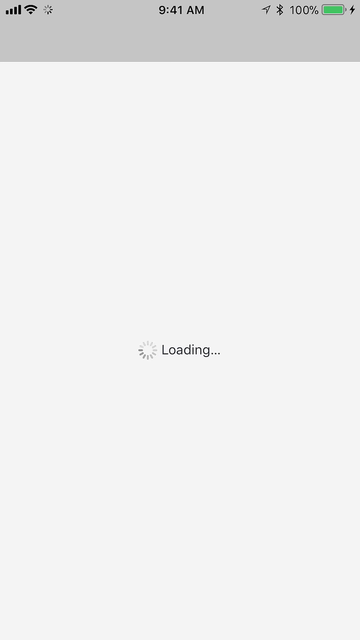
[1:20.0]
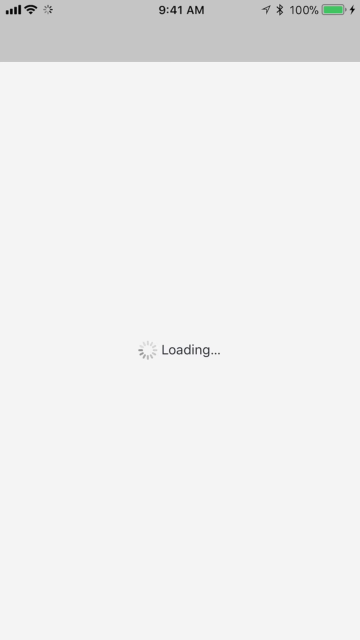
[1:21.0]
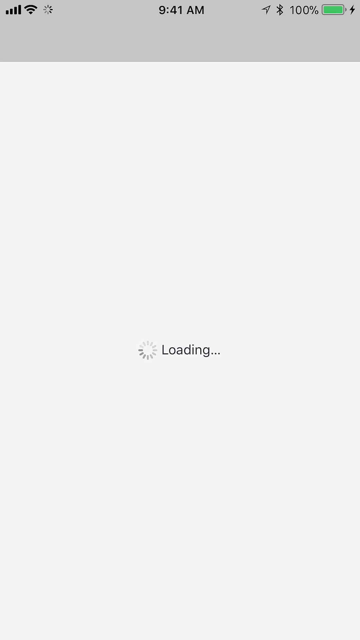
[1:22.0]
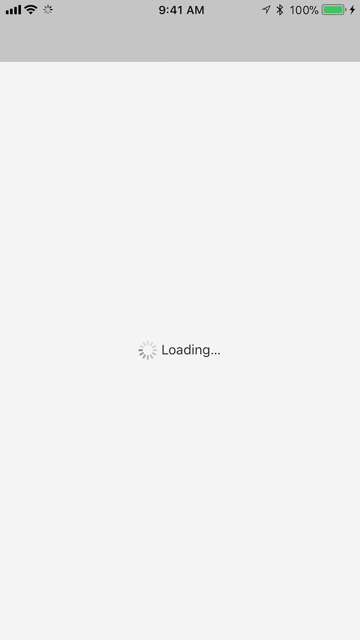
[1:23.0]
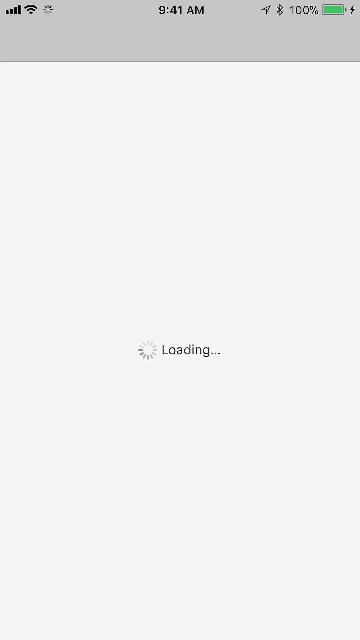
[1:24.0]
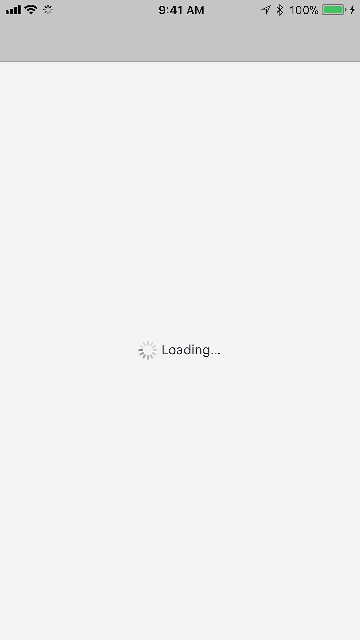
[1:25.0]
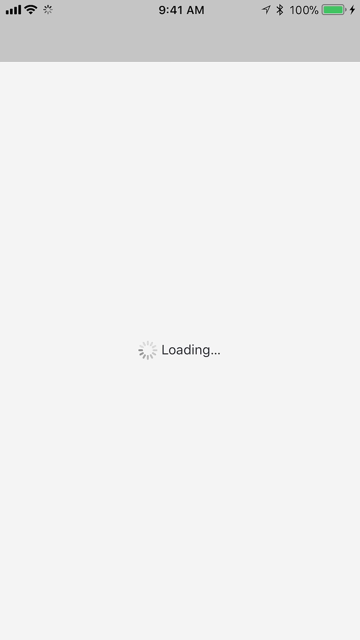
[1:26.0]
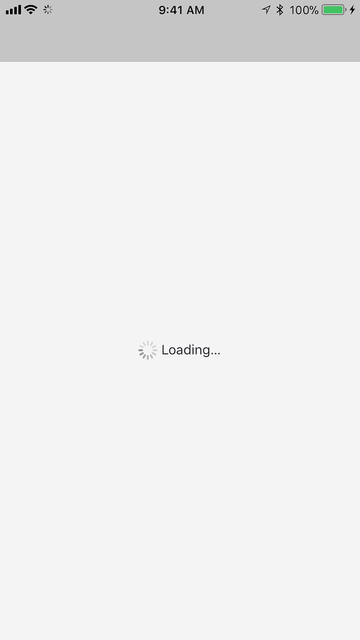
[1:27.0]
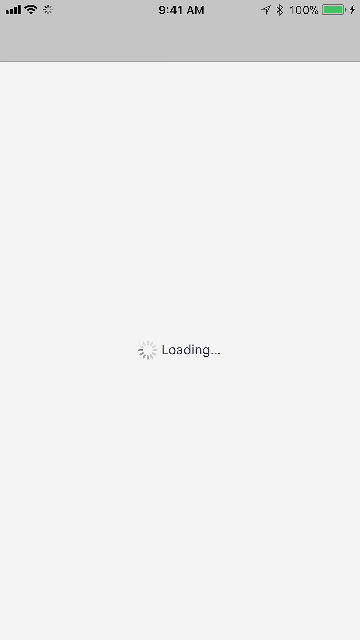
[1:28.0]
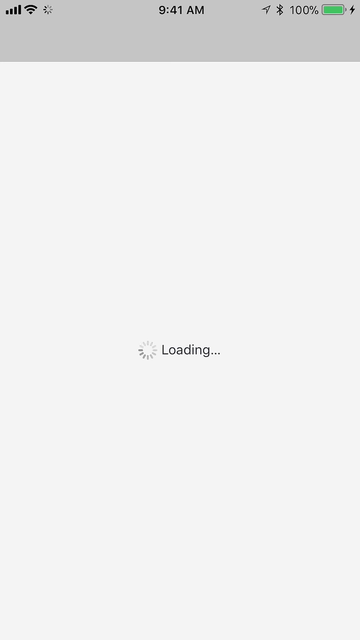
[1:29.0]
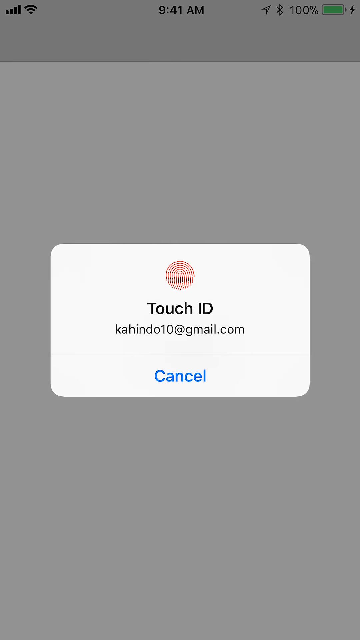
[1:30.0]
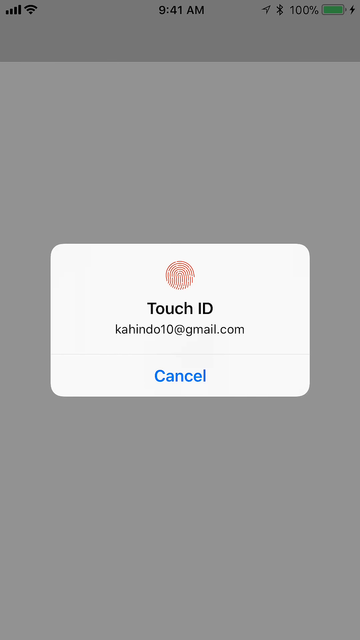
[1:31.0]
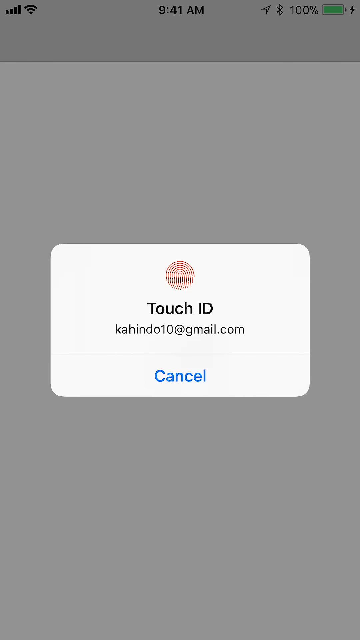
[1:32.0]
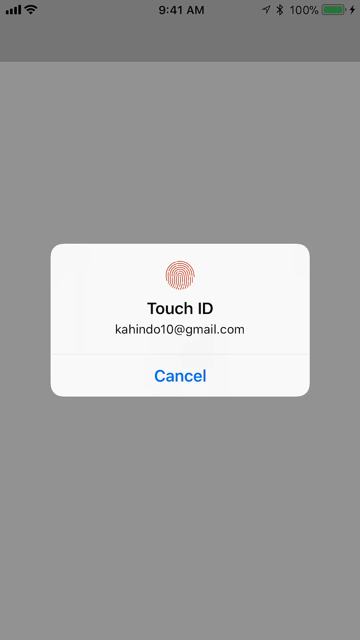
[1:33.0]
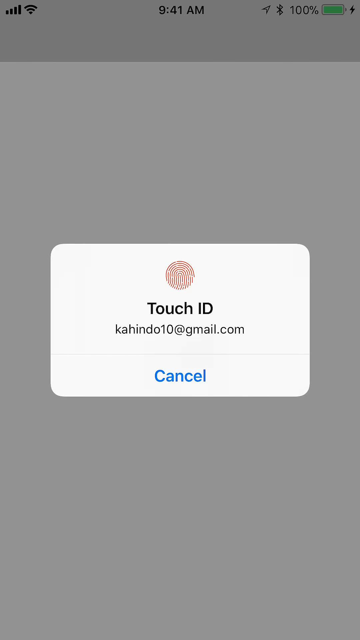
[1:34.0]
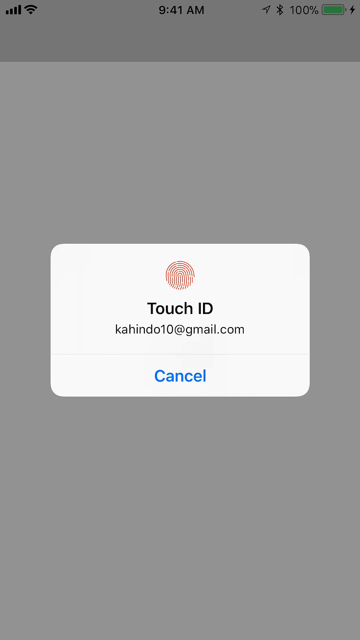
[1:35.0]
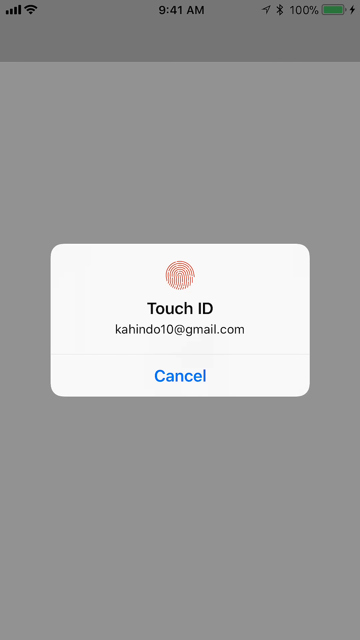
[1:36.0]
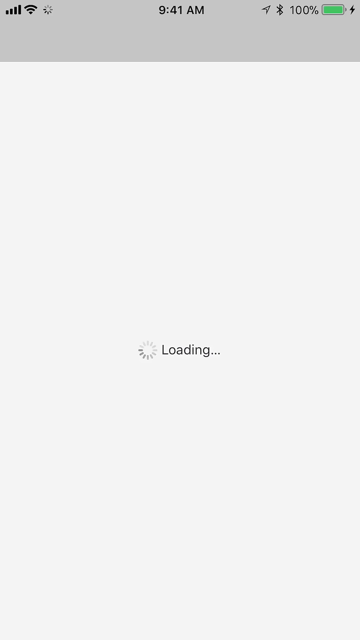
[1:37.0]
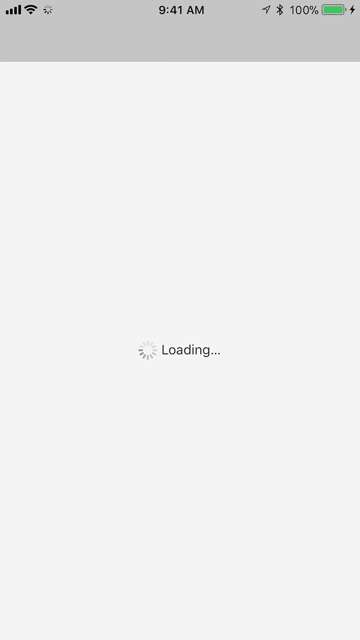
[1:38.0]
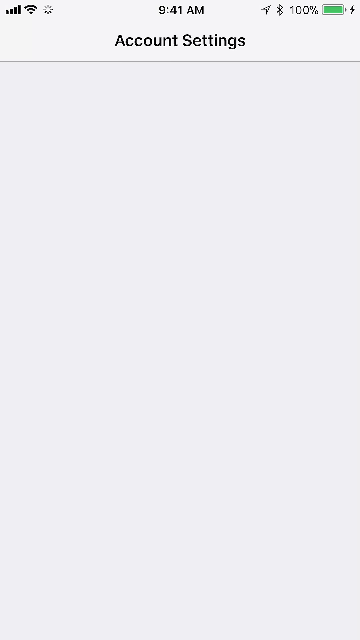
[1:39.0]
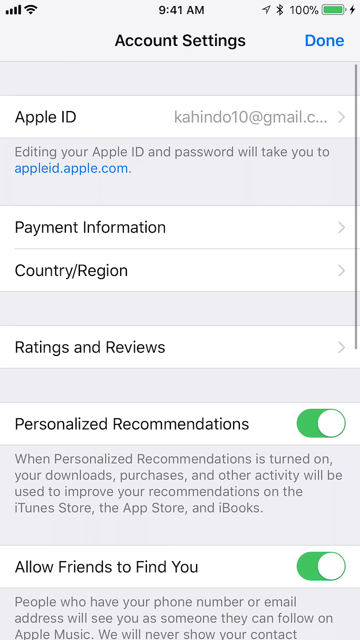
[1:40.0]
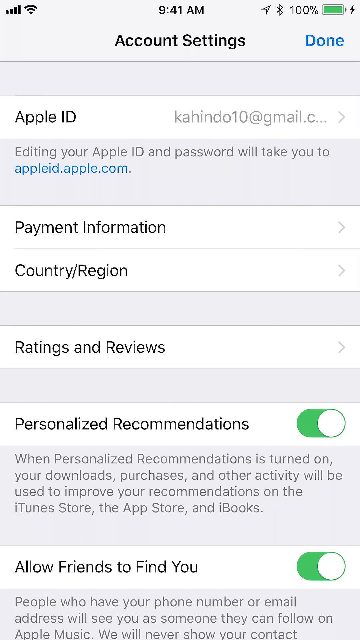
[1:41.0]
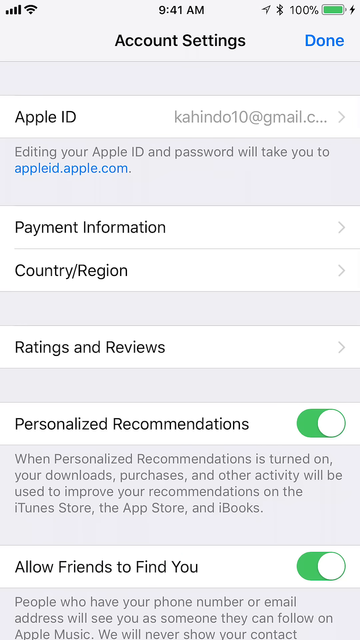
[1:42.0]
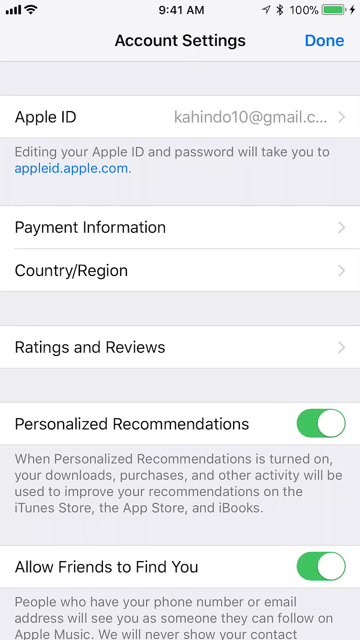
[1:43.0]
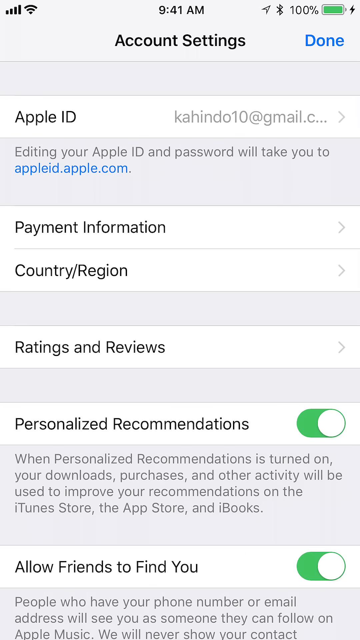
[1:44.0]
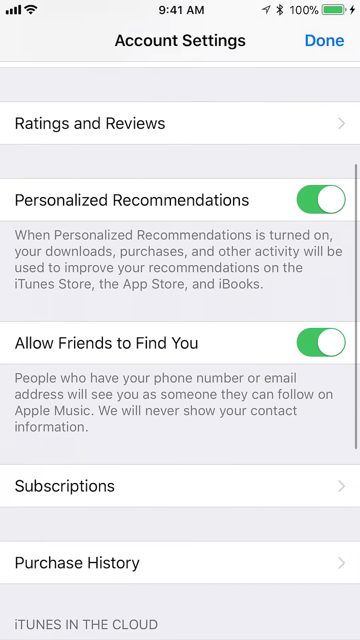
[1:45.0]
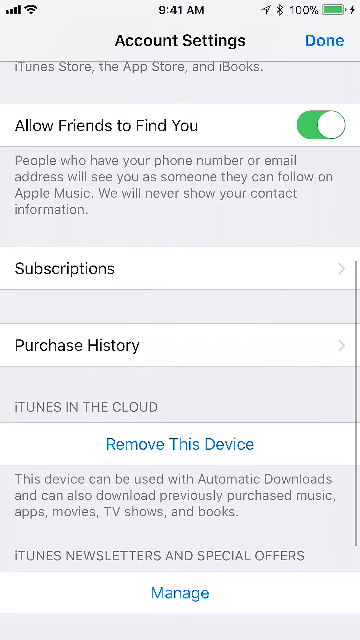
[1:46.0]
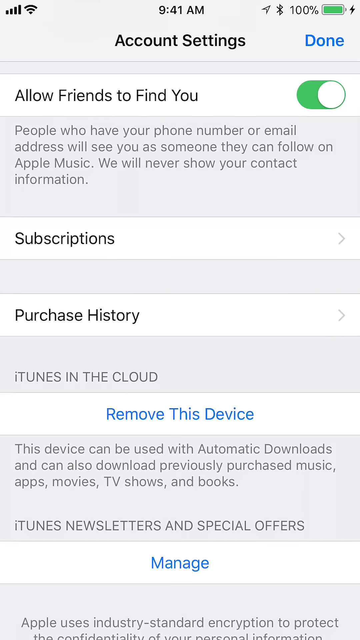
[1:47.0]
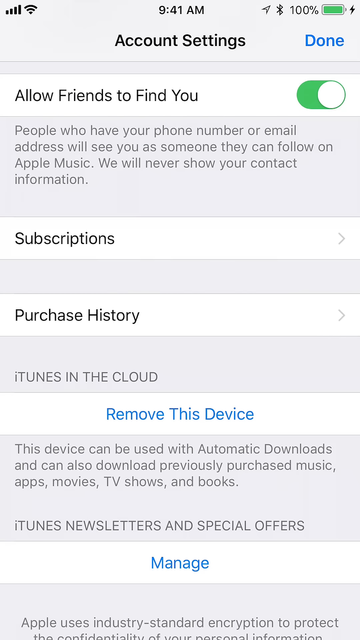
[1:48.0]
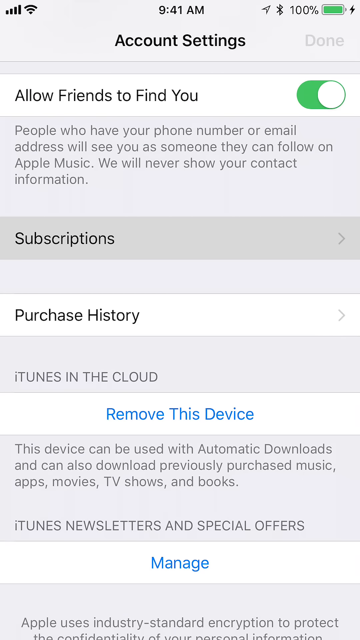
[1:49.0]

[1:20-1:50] What looks like an iPhone screen says "loading", and on the left side there is a dark gray circle that looks like it is thinking, going around like a clock. The phone then navigates to a screen that says "Touch ID", with the email "Cohindo10@gmail.com" in black text underneath and "cancel" below that. It then seems to navigate to a menu that says "Account Setting", which is scrolled down to show "Allow Friends to Find You", "Subscriptions", "Purchase History", "Remove This Device" and "Manage"; the last two are in blue text. The video then cuts back to the screen showing it is loading again, with the circle seeming to move clockwise, the moving part dark gray over light gray.